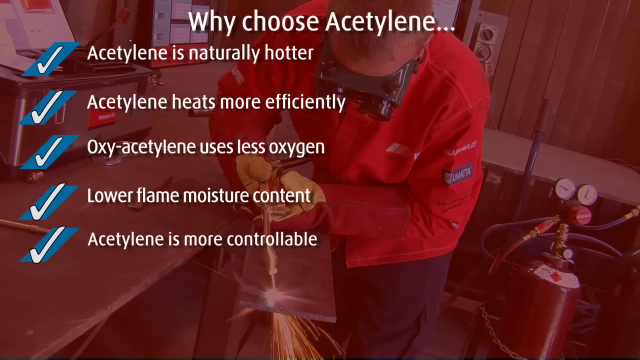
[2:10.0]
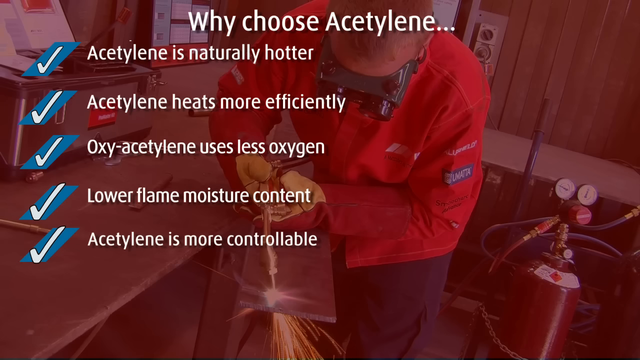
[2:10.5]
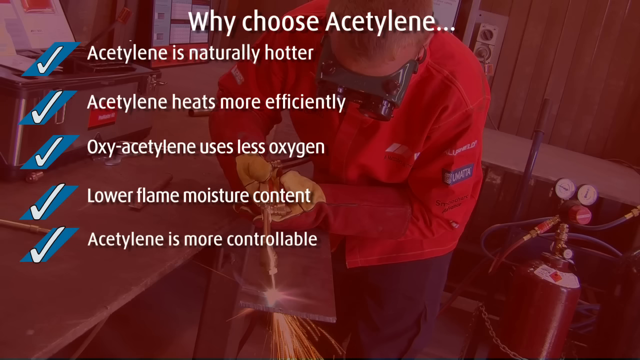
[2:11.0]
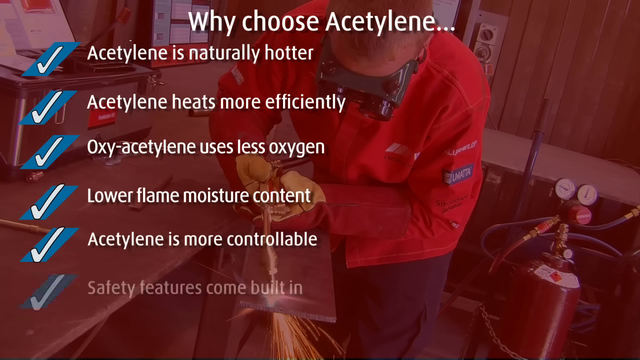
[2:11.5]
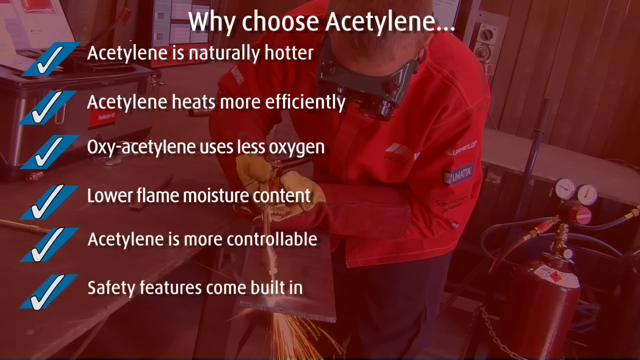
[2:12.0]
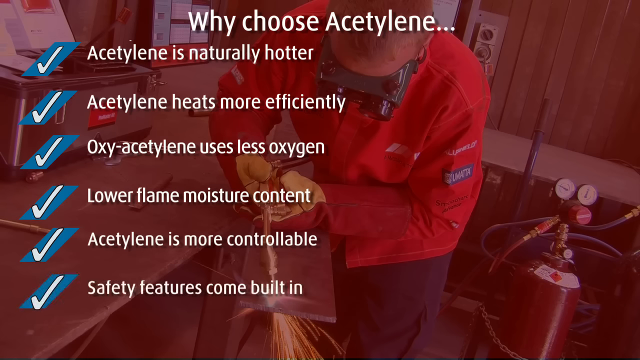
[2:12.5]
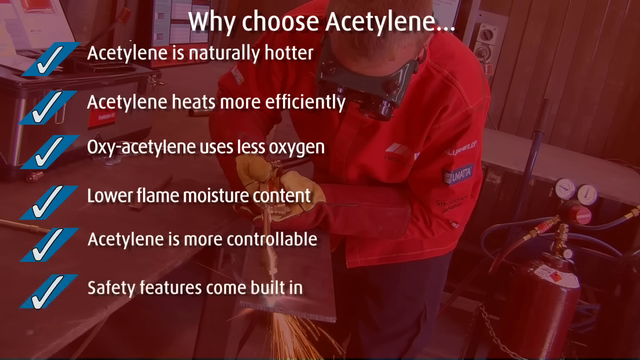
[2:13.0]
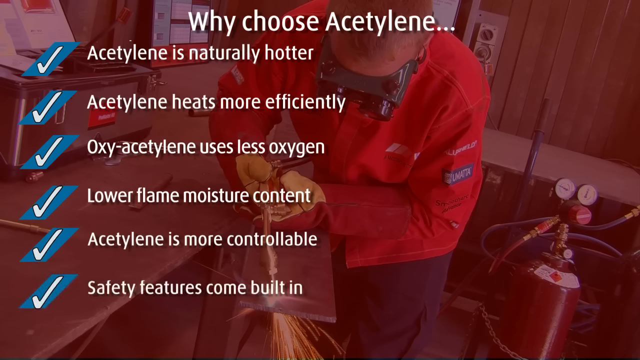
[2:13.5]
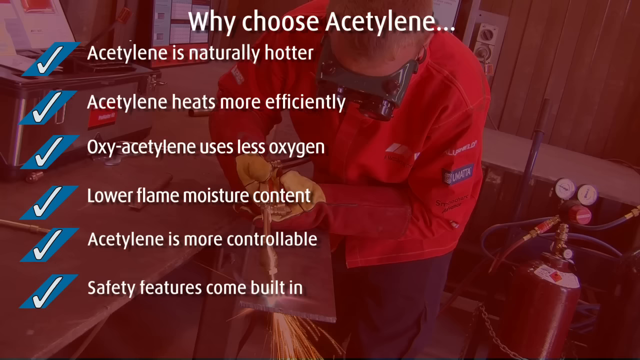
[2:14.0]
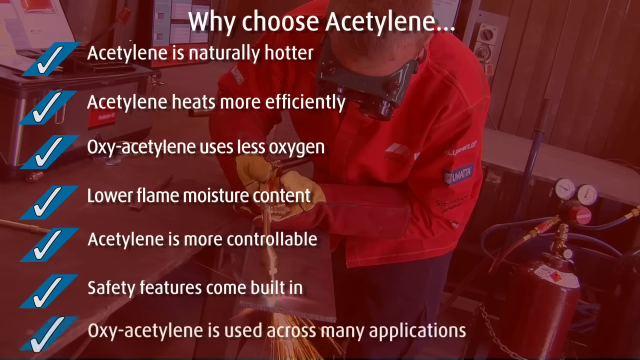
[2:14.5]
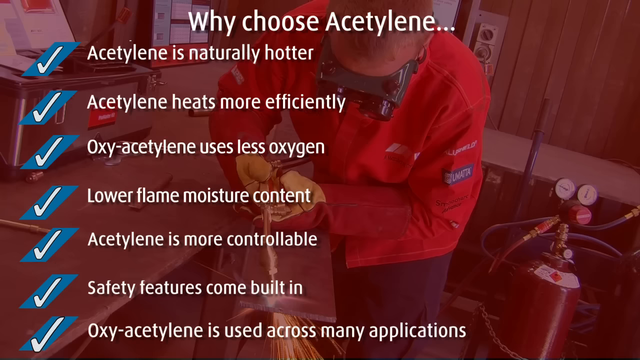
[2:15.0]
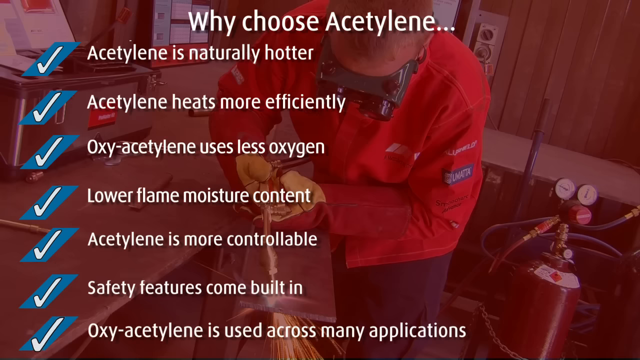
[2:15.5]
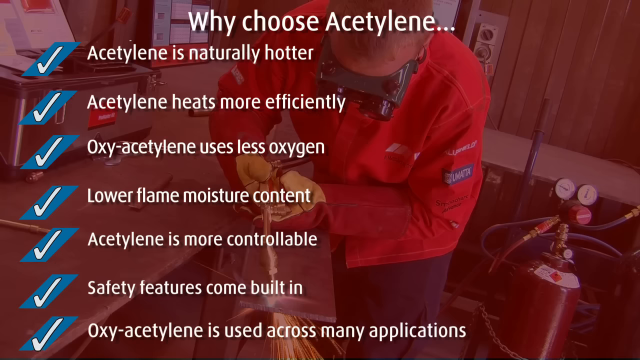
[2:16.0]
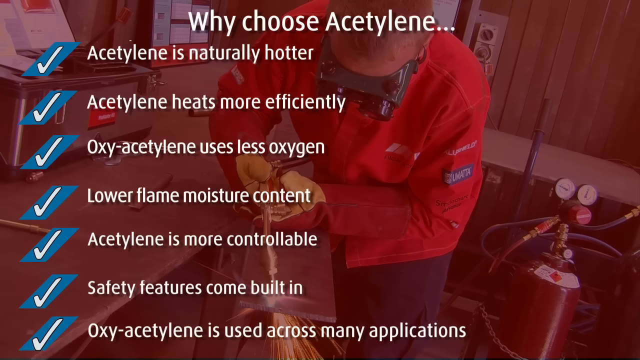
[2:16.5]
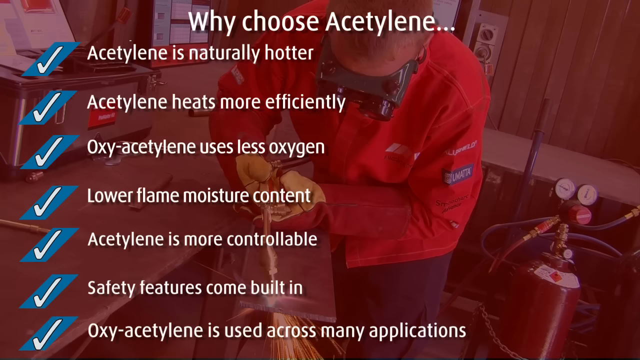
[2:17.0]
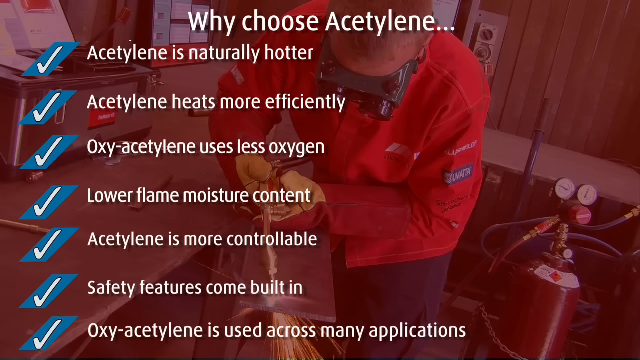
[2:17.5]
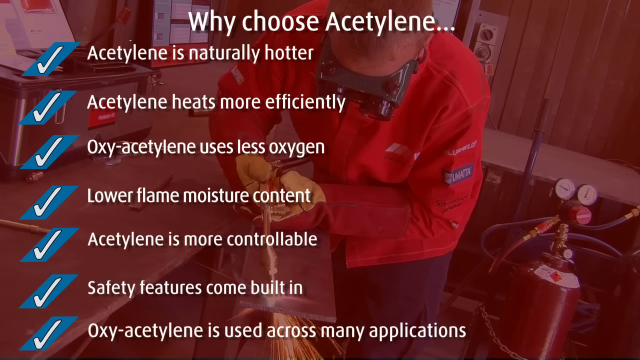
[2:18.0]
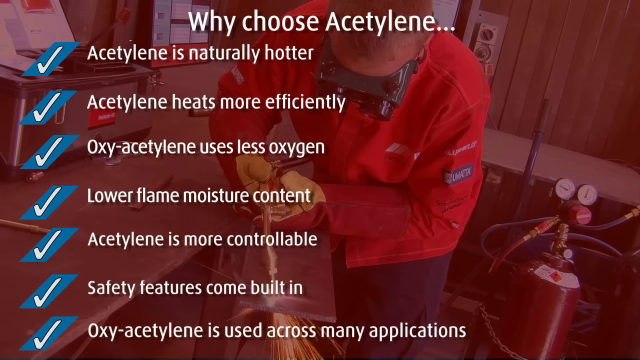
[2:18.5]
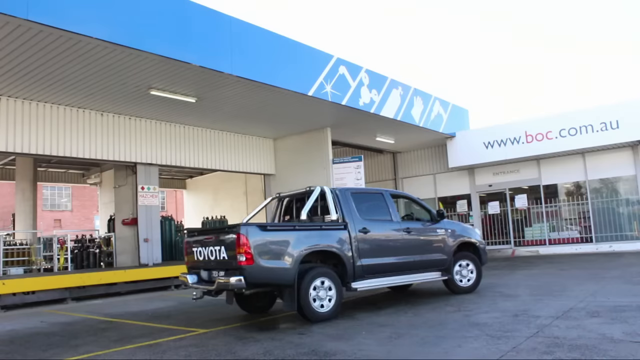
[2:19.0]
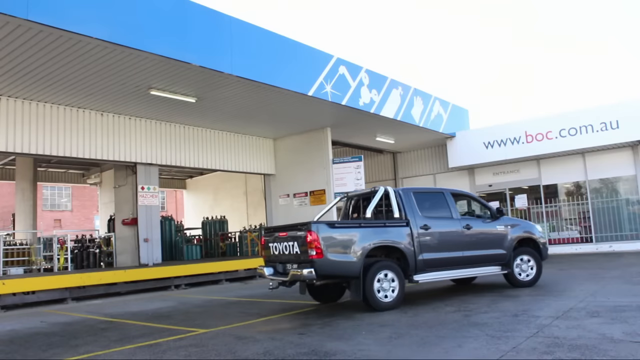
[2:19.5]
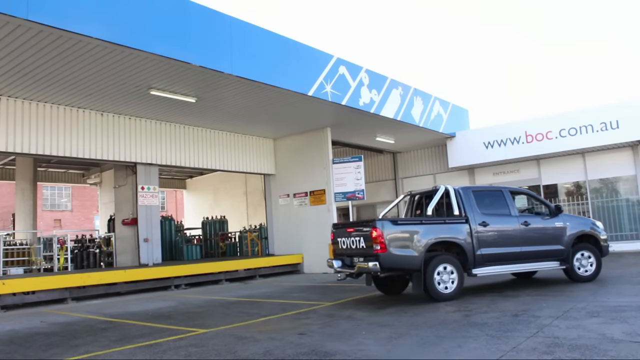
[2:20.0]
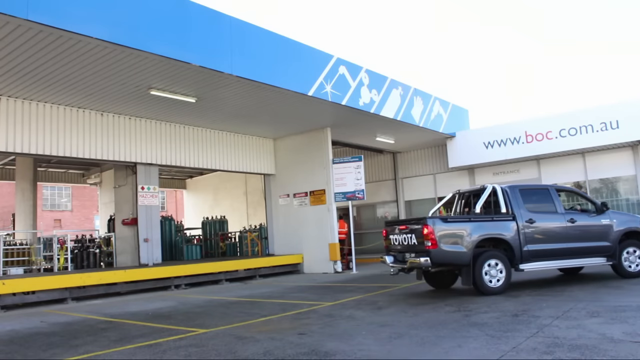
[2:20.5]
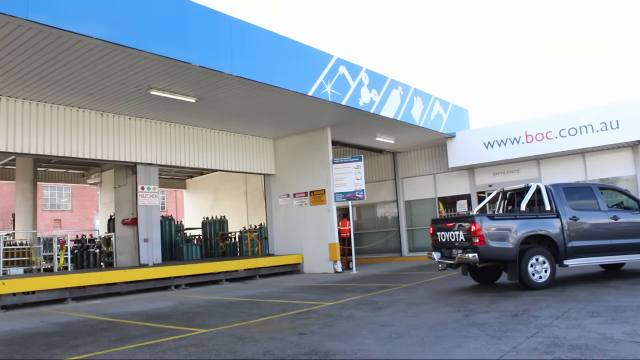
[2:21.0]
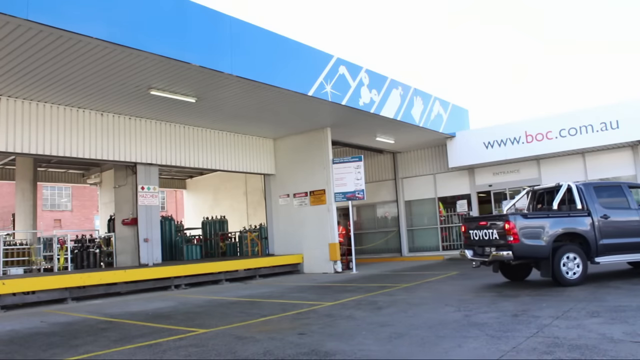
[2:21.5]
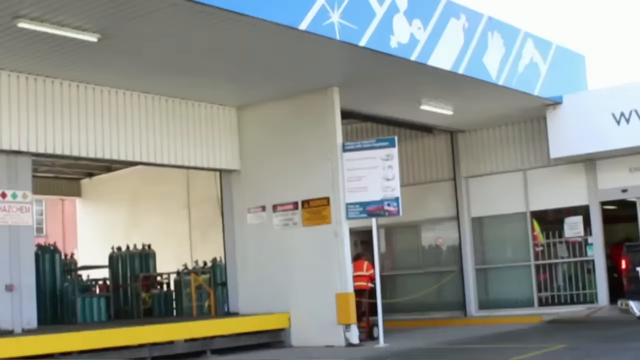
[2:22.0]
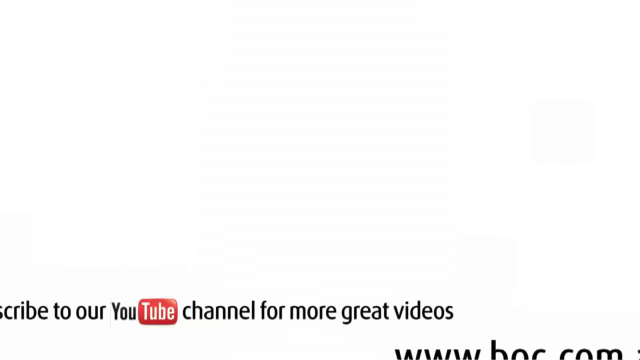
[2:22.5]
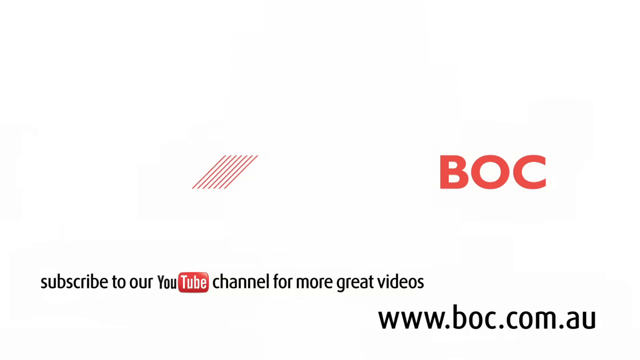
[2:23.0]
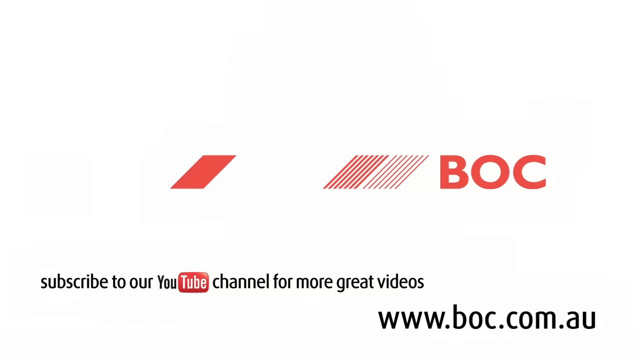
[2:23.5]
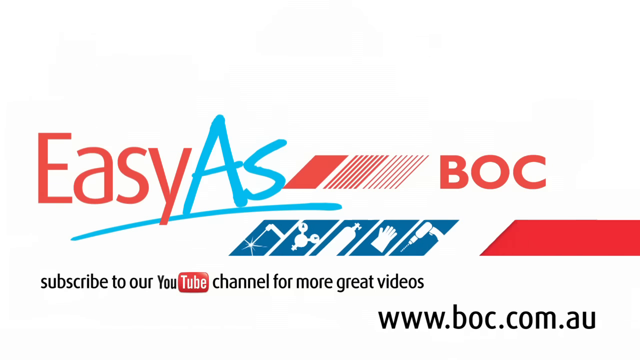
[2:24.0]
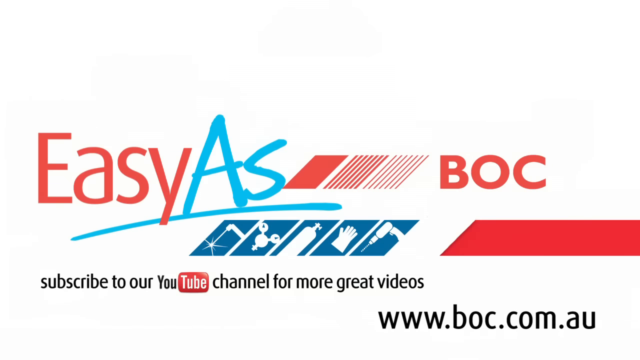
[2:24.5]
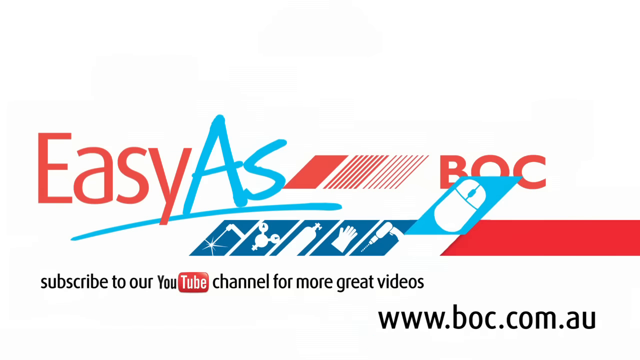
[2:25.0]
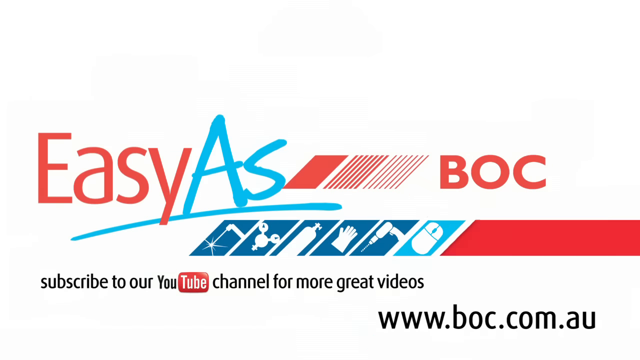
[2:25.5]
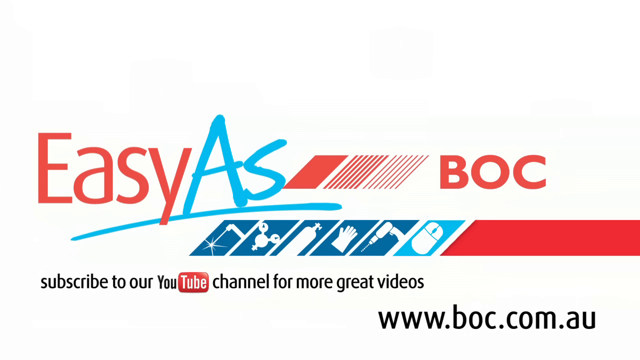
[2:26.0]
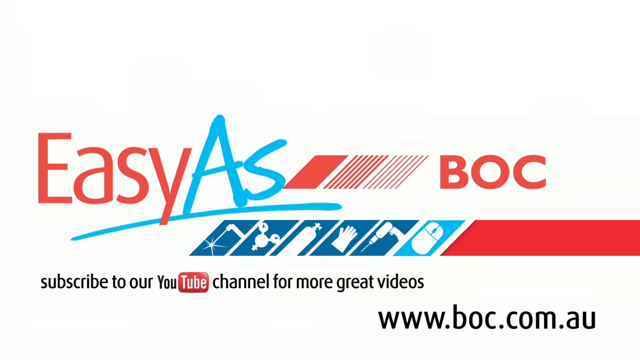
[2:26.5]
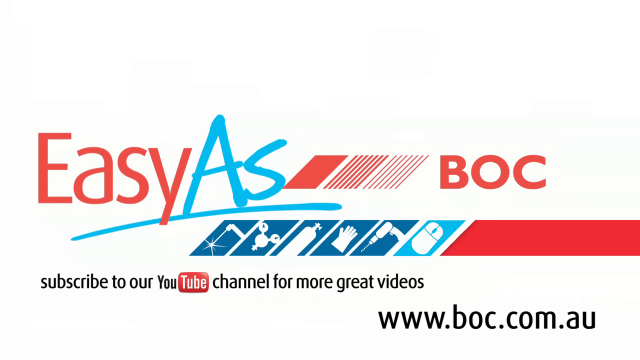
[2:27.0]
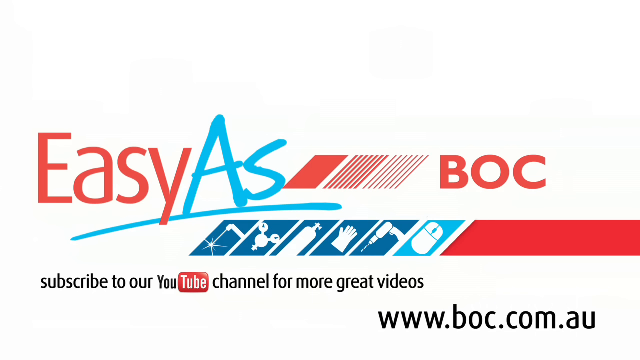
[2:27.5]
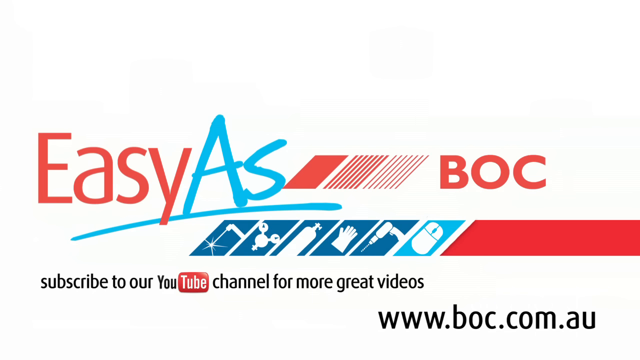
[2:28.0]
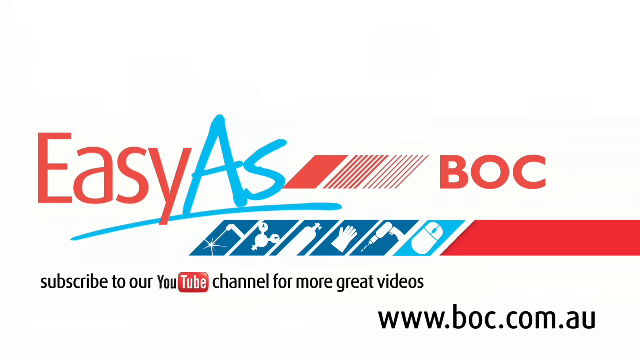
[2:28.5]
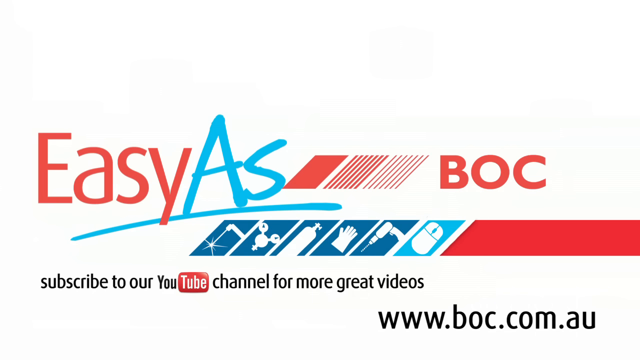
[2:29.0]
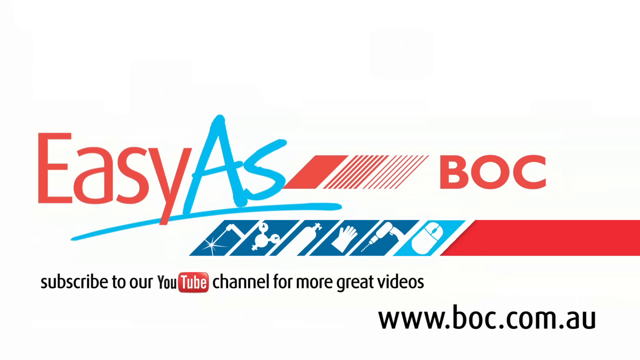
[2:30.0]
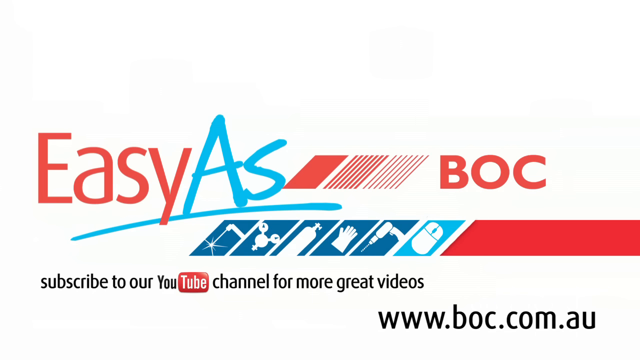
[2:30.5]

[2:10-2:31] The man using the torch is in the background, wearing a red safety jacket, gloves, and protective goggles on his face. Five check marks are listed: "acetylene is naturally hotter," "acetylene heats more efficiently," "oxyacetylene uses less oxygen," "lower flame moisture content," and "acetylene is more controllable." A sixth check mark pops up reading "safety features come built-in," and then a seventh, "oxyacetylene is used across many applications." Next, a four-door truck with "Toyota" on the back drives in front of the building, with the website still visible at the top of the building. The final shot is the logo reading "easy as BOC," with "subscribe to our YouTube channel for more great videos" underneath and the website again in the bottom right-hand corner.